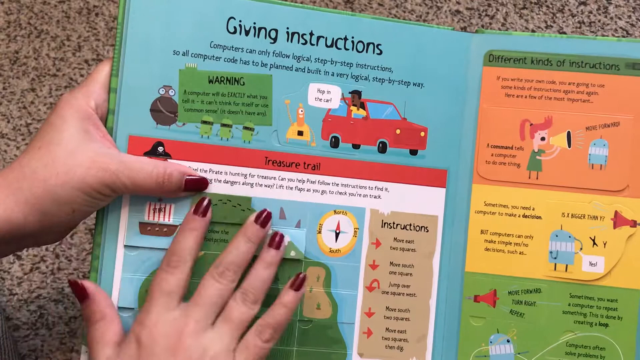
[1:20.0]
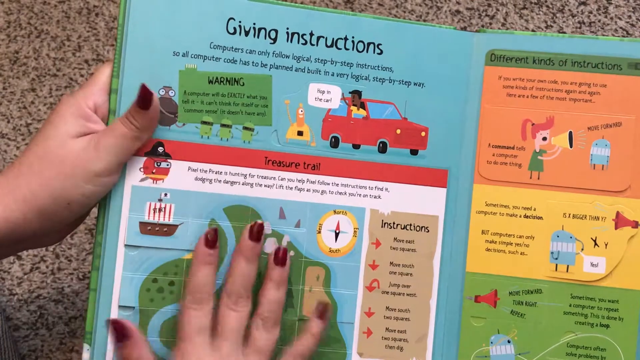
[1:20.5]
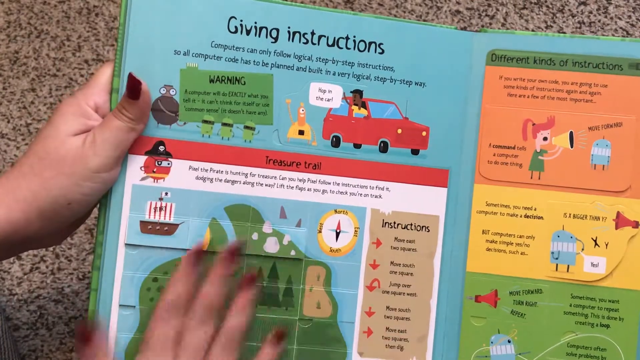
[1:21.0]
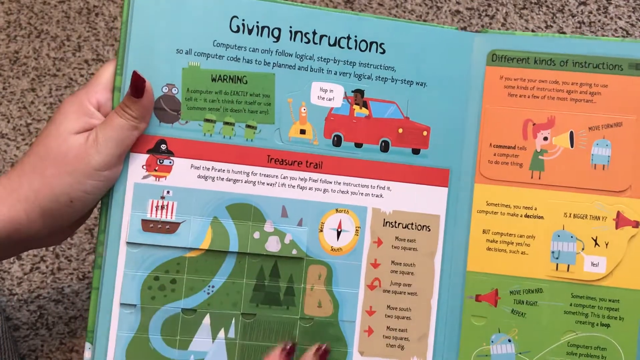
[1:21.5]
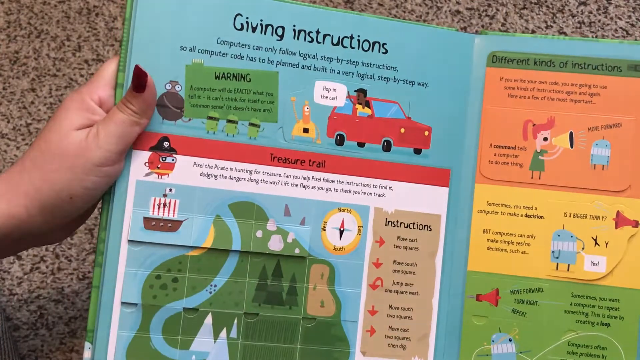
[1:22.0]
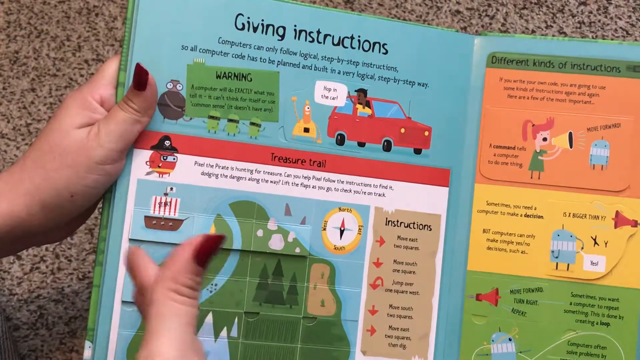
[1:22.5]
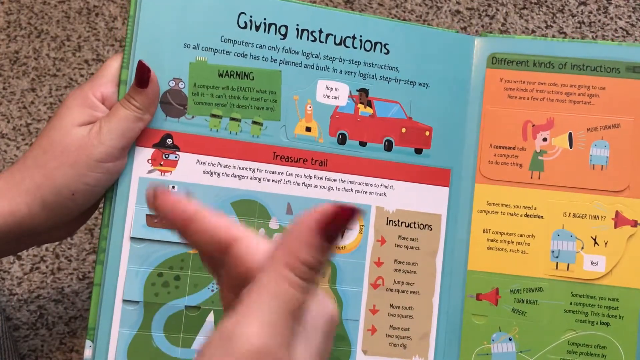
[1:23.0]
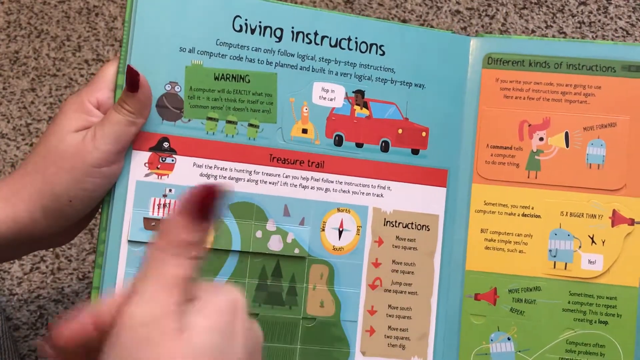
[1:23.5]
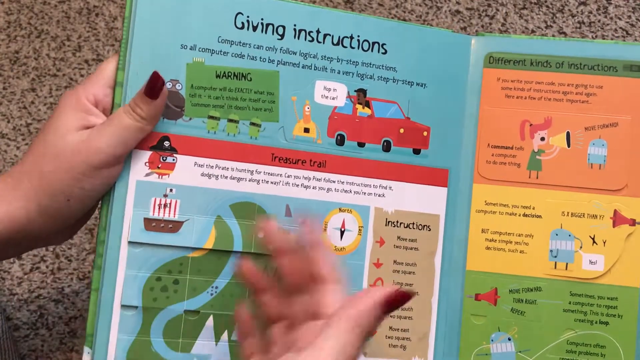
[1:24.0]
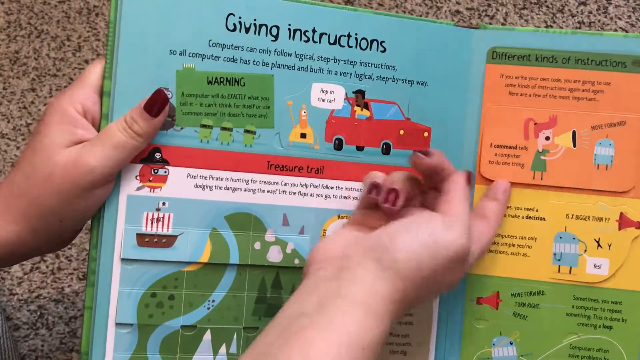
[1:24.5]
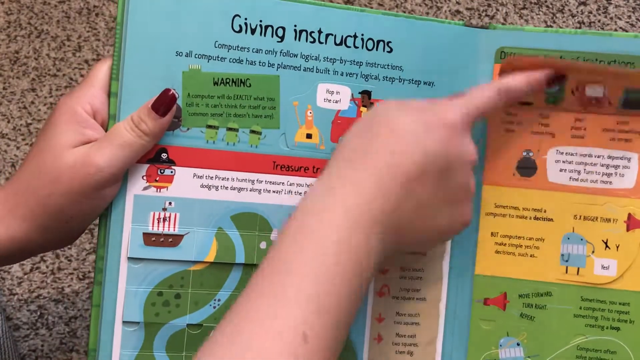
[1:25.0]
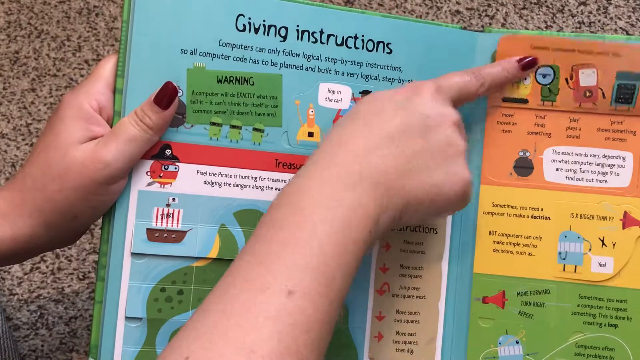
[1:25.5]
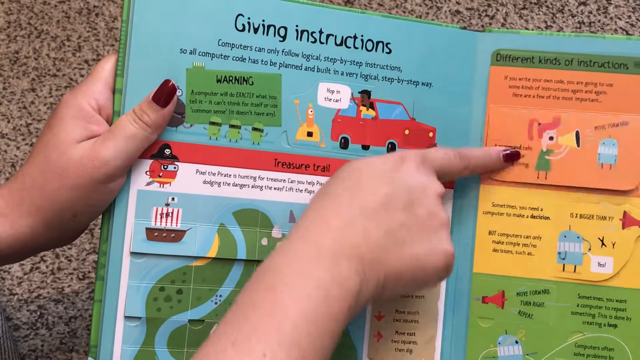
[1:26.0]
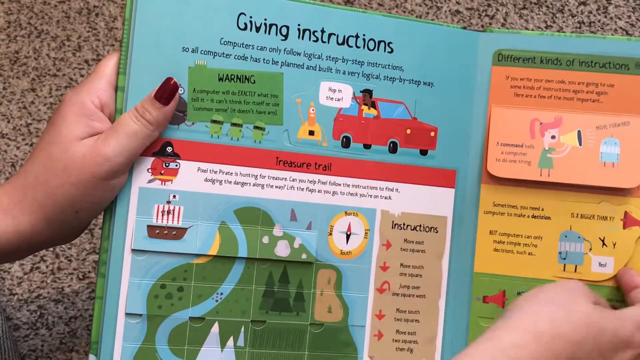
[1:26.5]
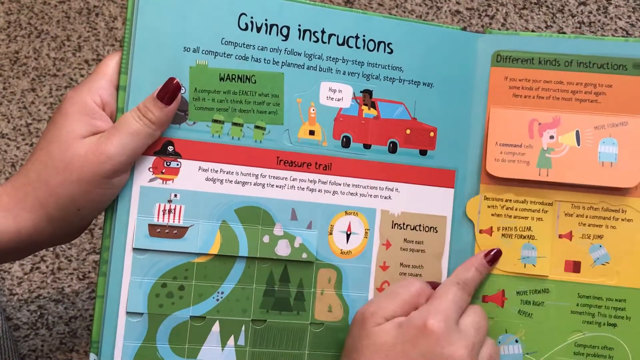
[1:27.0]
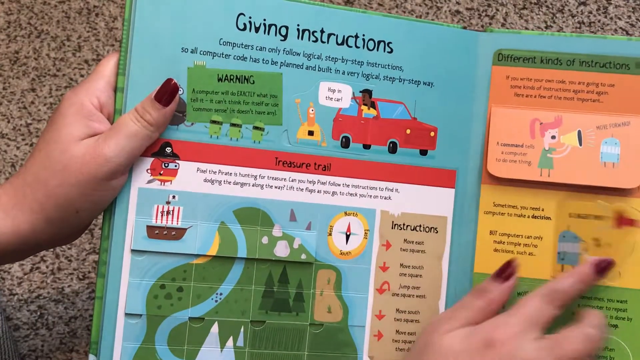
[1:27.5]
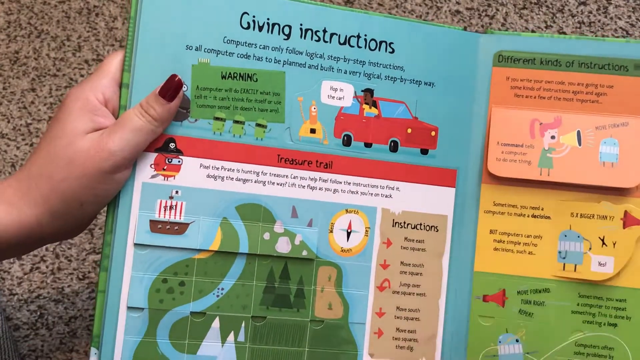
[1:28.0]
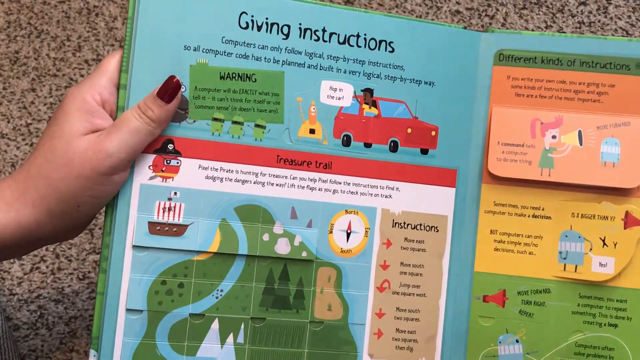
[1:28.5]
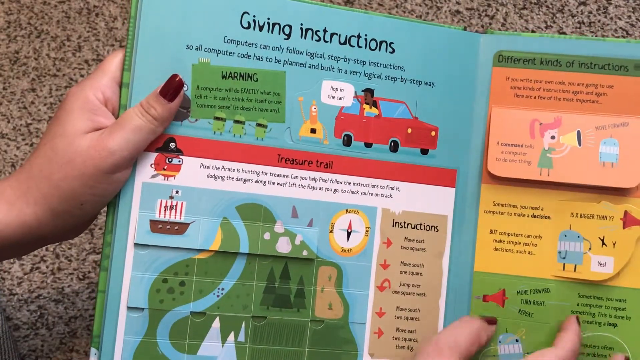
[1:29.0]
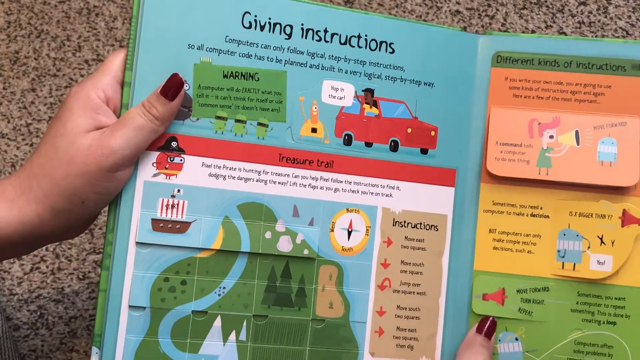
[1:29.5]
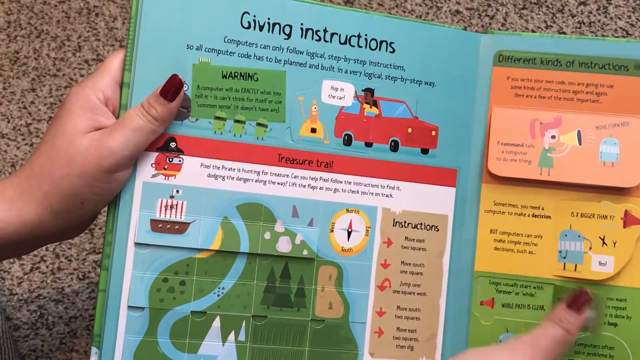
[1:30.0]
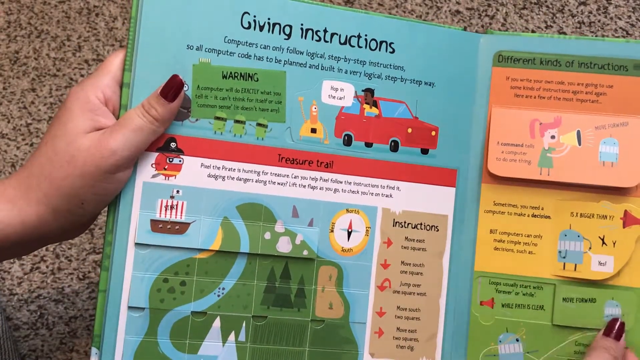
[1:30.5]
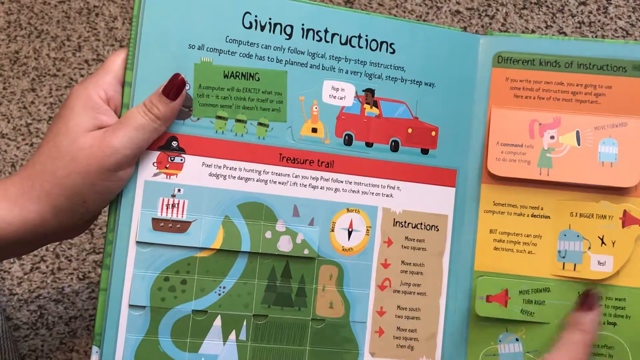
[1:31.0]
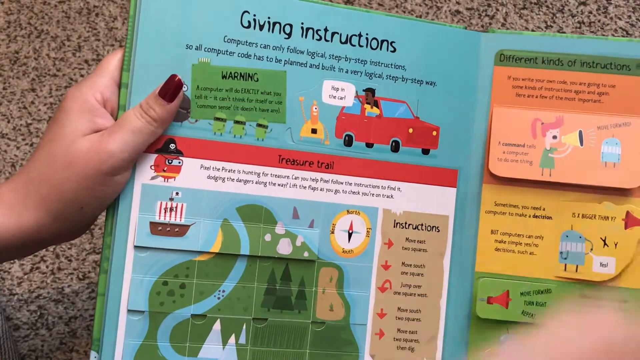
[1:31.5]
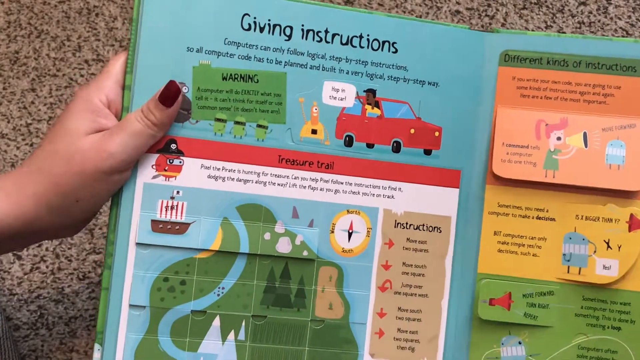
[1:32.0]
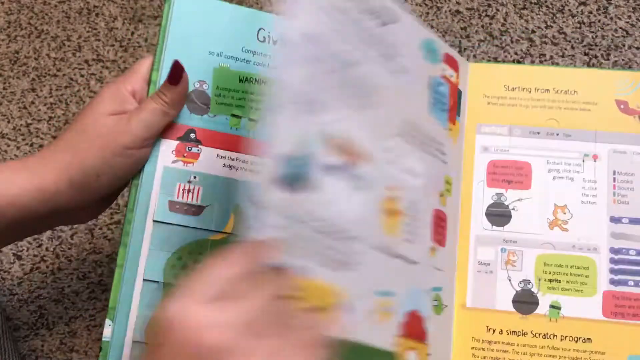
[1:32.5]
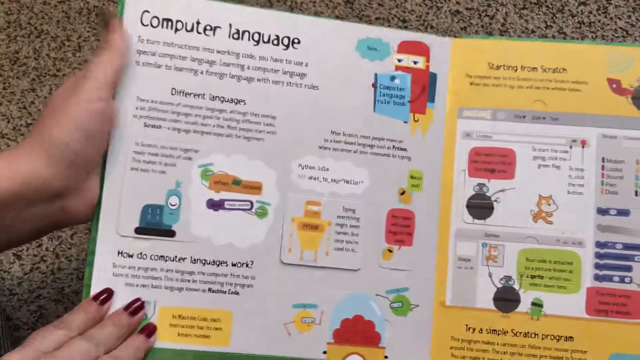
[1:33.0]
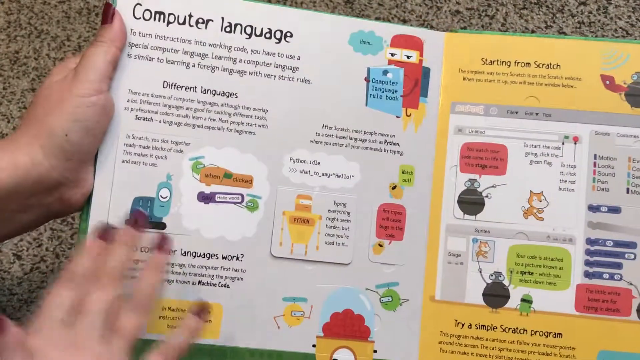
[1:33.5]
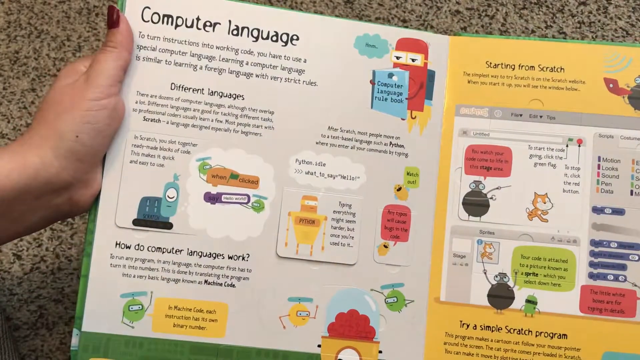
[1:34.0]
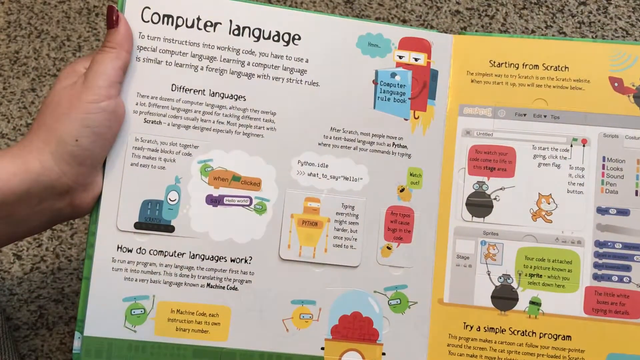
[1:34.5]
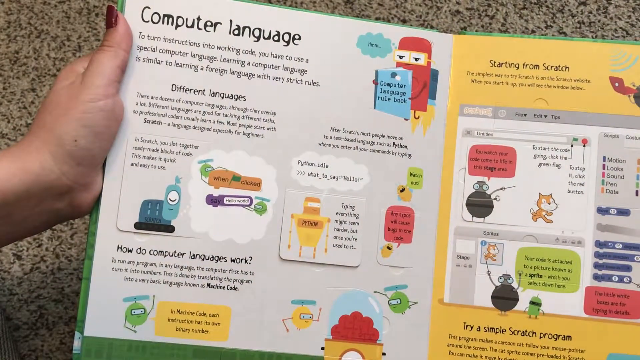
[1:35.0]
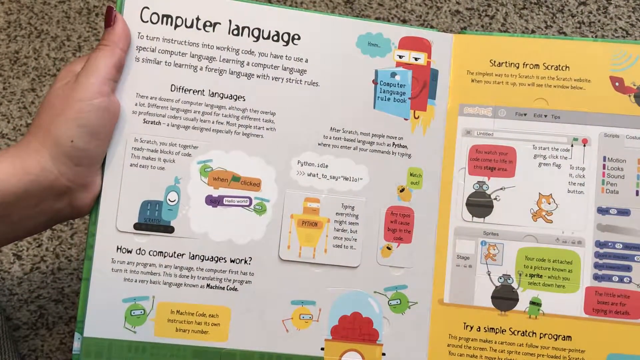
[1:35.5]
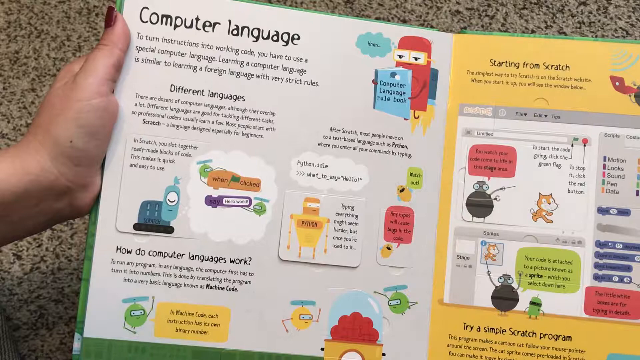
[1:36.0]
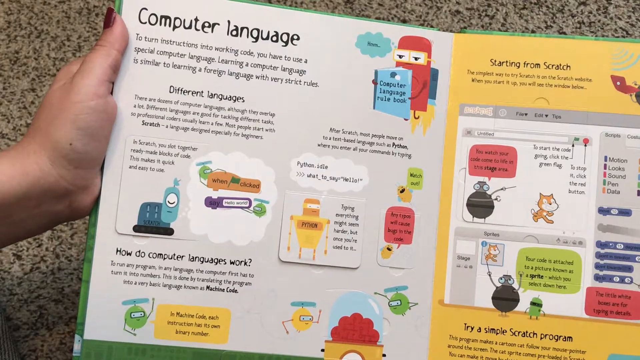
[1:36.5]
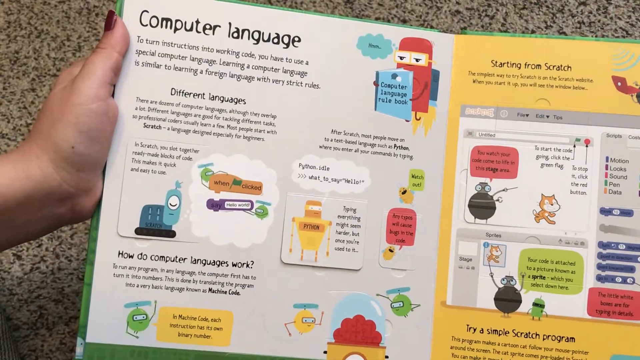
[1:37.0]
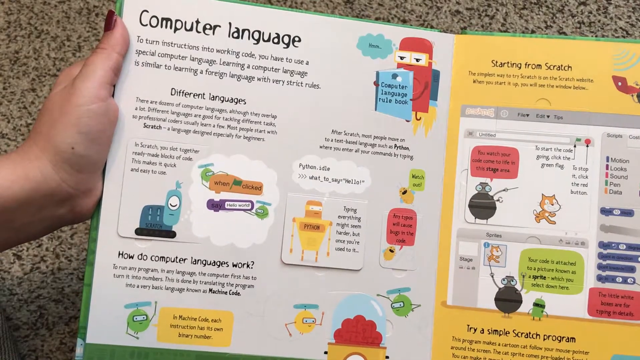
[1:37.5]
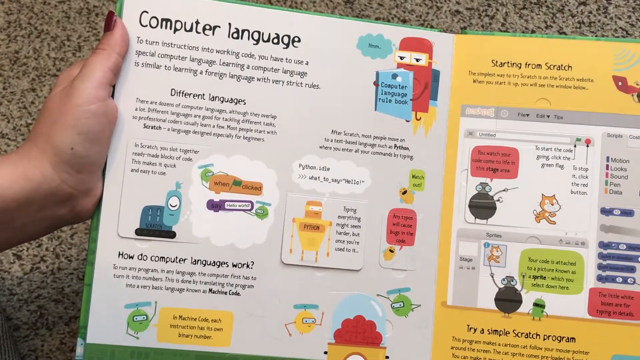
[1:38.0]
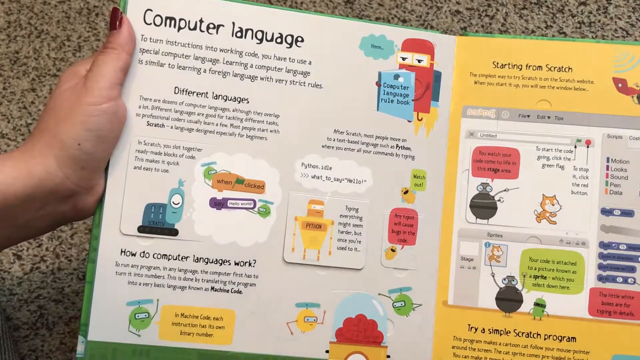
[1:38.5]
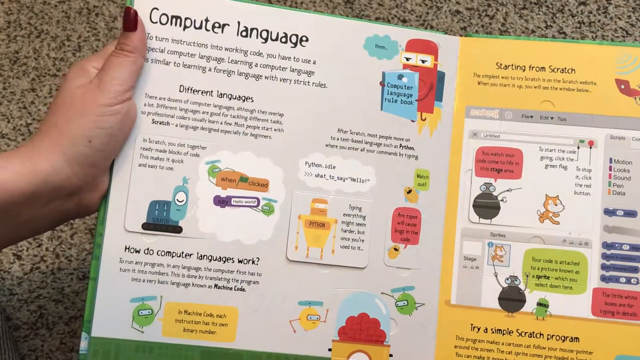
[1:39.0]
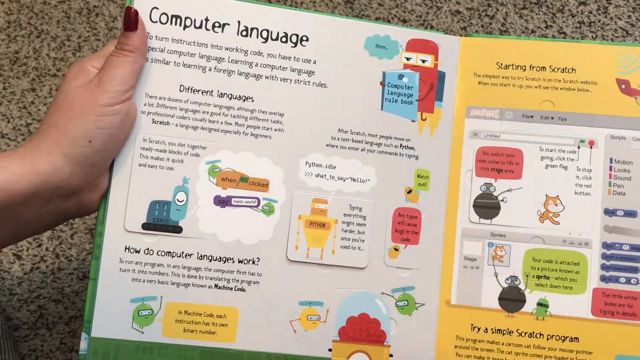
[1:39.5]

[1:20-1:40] Still on the "Giving instructions" page, the woman makes a circular motion over the treasure trail map. She goes to the next page, where a chart is titled "Different kinds of instructions". She flips the orange part to reveal a row of electronics on the top half of the flap; on the bottom half there is a lone electronic character that looks like a grenade but is not one, with a white talk bubble whose text is too blurry to read. She then flips the yellow part of the chart, a blue robot, revealing a story that happens to this blue robot. Next she flips the green part, an illustration with a red bullhorn; underneath, the bullhorn is still there but smaller, with a bunch of text. The next page is "Computer language", with two sections, "Different languages" and "How do computer languages work", and about five or six flaps in total.